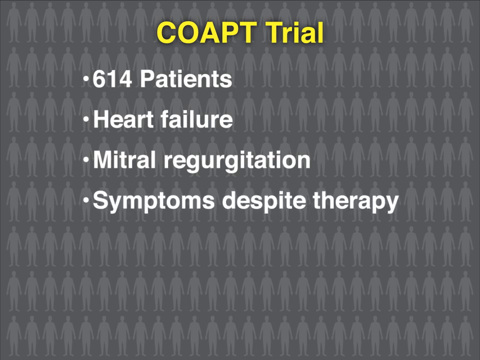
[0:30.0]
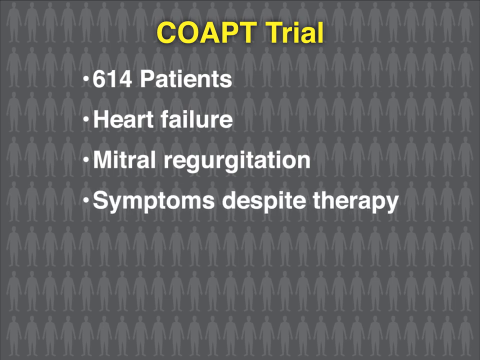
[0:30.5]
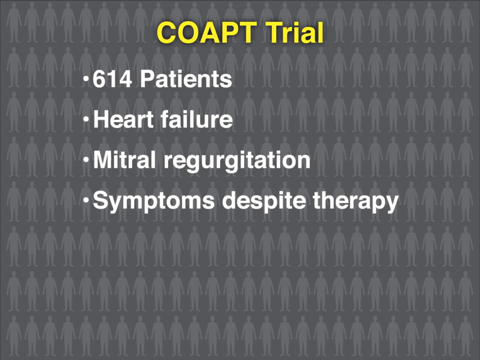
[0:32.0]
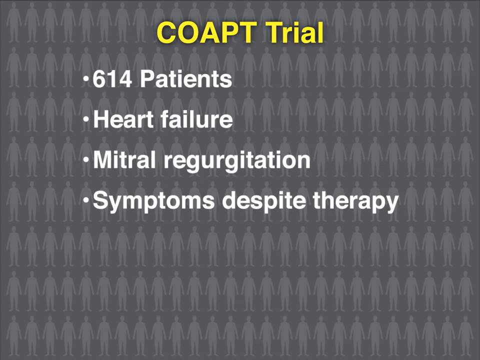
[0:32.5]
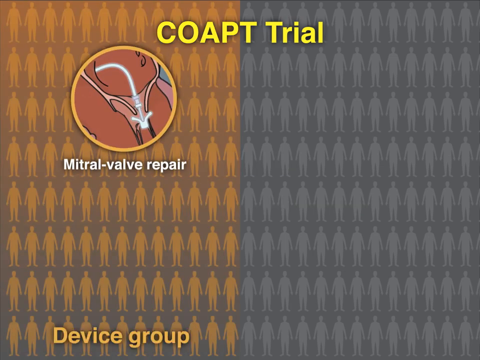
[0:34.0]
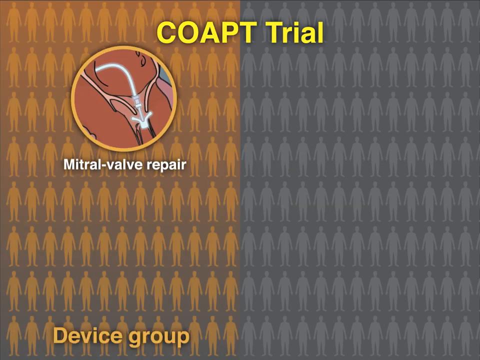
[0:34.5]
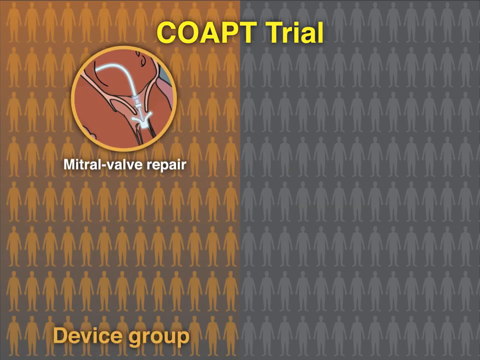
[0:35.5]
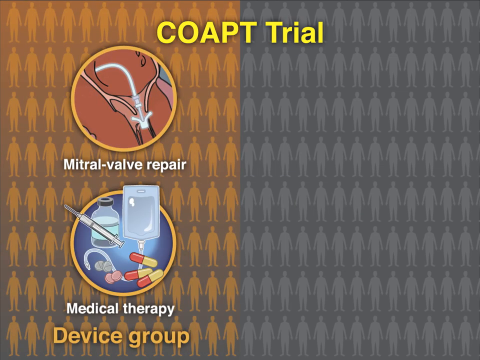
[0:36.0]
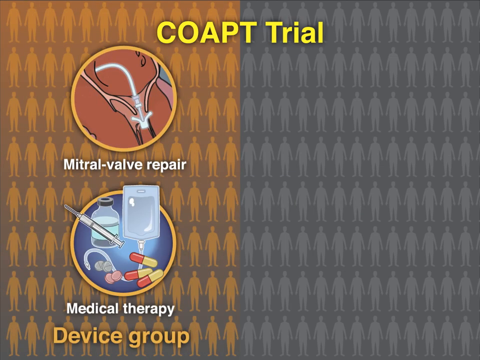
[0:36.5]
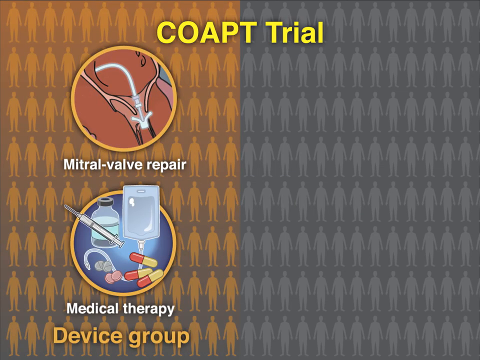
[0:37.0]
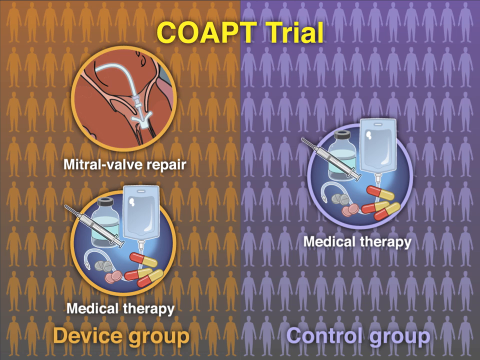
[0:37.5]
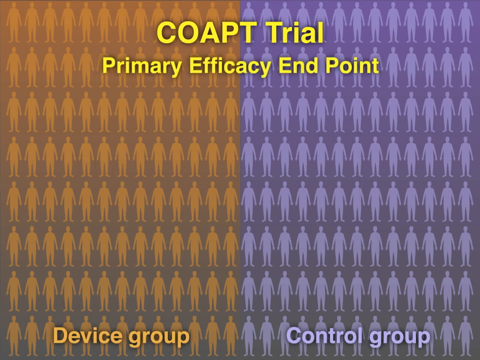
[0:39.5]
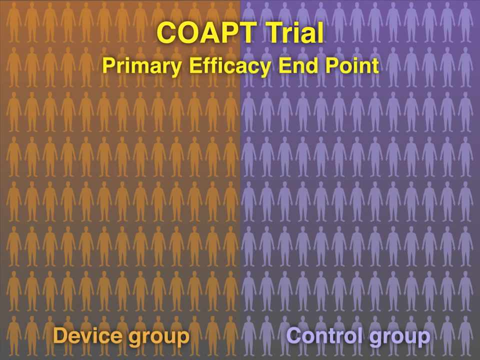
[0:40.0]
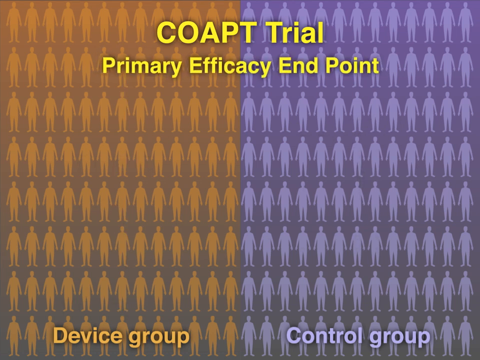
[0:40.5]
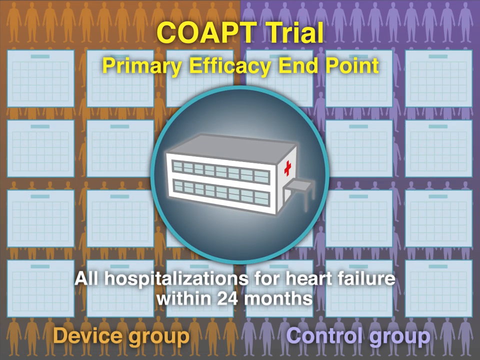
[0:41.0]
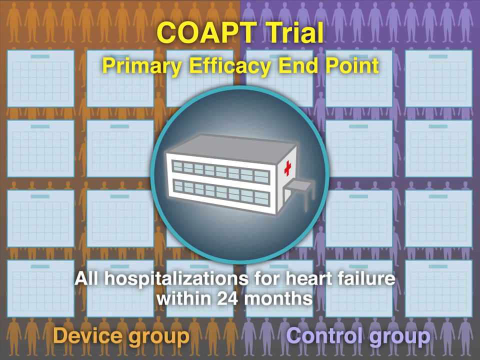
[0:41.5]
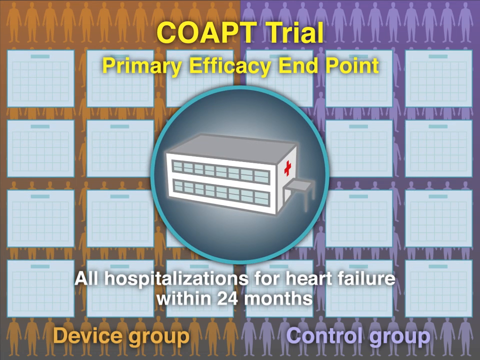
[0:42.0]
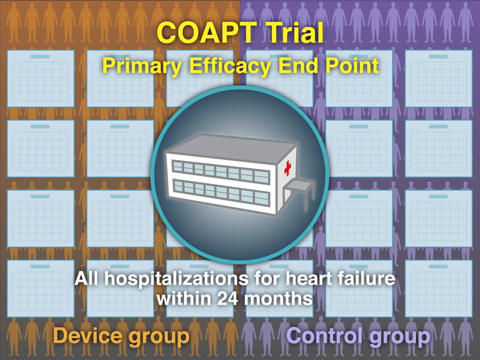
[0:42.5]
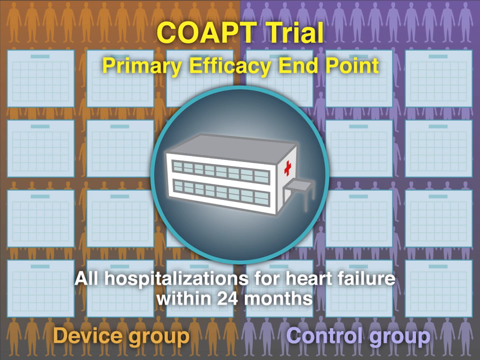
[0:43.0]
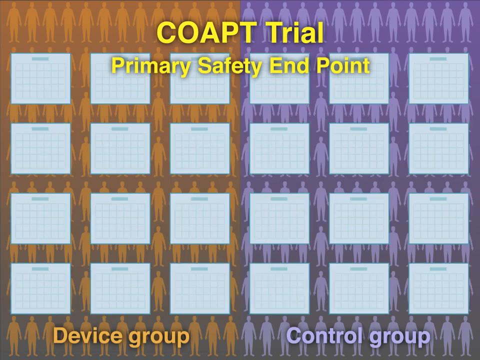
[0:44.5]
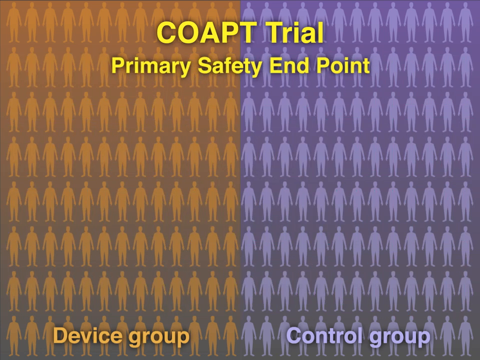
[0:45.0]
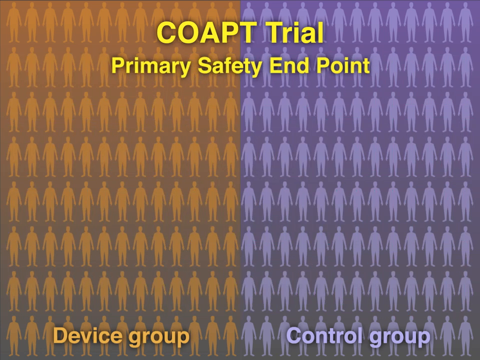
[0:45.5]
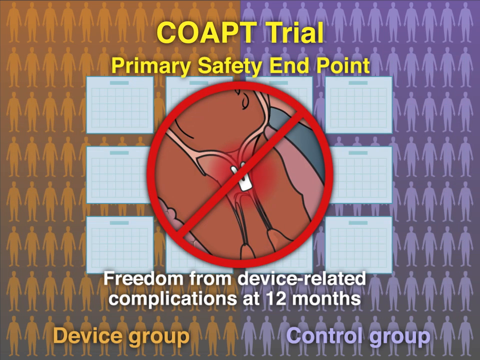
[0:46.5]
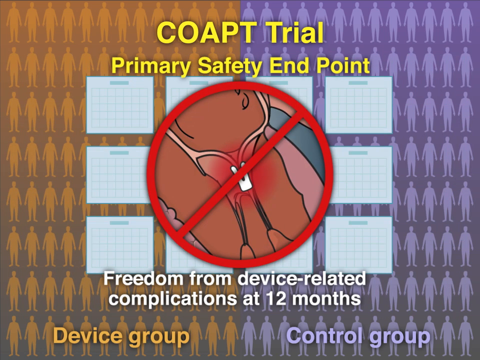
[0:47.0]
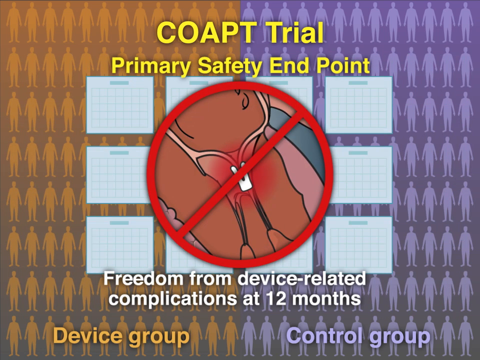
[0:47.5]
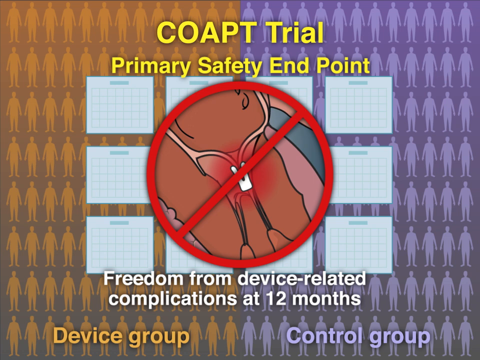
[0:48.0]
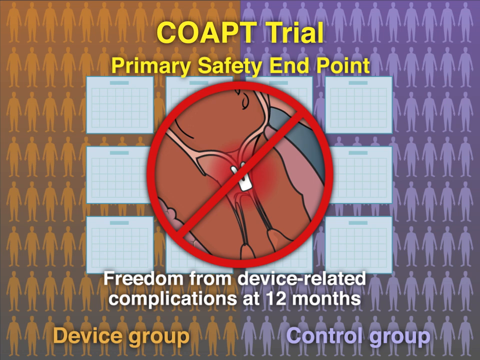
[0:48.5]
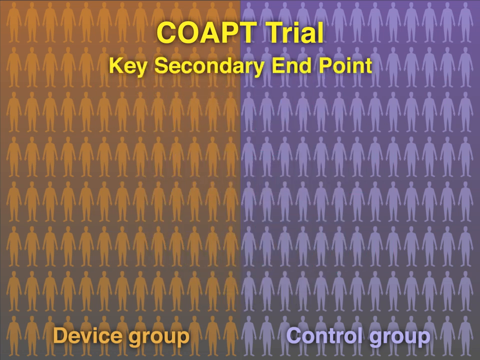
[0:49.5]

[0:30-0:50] A slide titled "COAPT Trial" appears, with "COAPT" in all capital letters and "Trial" with only the T capitalized, both in yellow. Beneath the title are four headliners in white: "614 patients", "heart failure", "mitral regurgitation" and "symptoms despite therapy". They are set against gray with silhouettes of human people in the background. The next slide, also titled "COAPT Trial" at the top in yellow, has a cartoon depiction of mitral valve repair, apparently showing the mitral valve being repaired. Beneath it is a cartoon depiction of some type of therapy, showing medications, IVs and other things used for therapy. On the right side of the slide is another cartoon depiction of medical therapy with the same image of IVs, pills, needles and drugs. A third slide reads "COAPT Trial, primary efficiency endpoint". Beneath it is a cartoon hospital with a blue circle around it, and underneath that it reads "all hospitalizations for heart failures within 24 months".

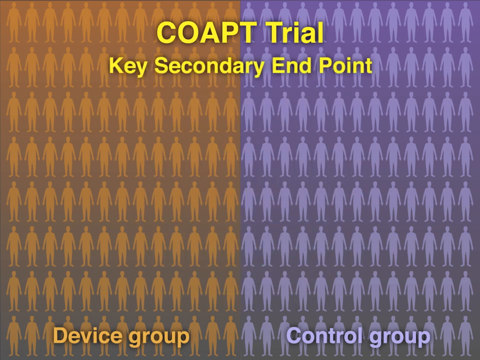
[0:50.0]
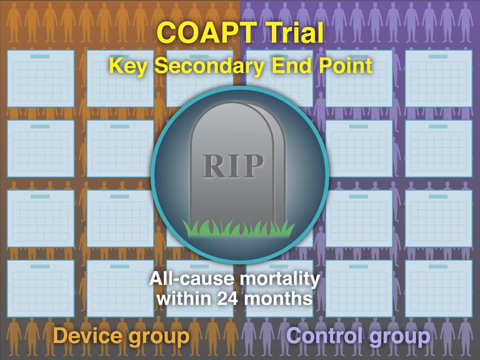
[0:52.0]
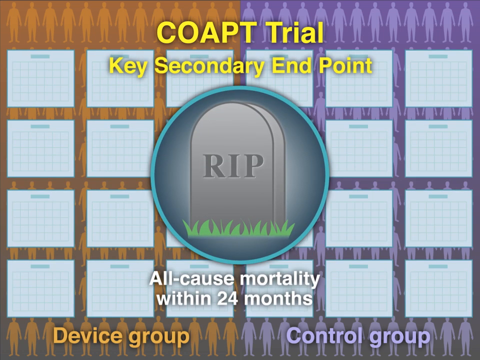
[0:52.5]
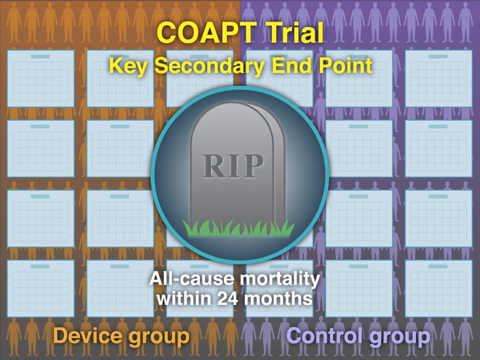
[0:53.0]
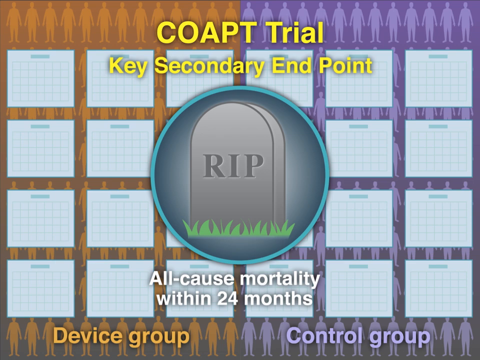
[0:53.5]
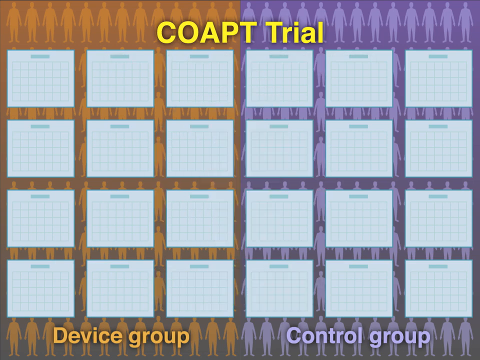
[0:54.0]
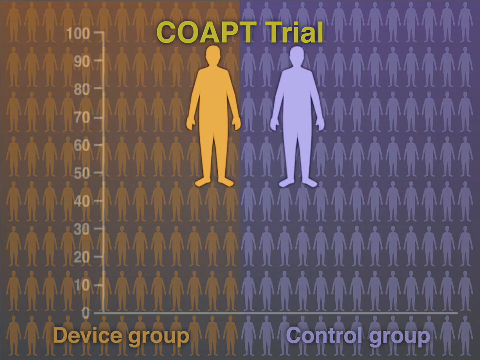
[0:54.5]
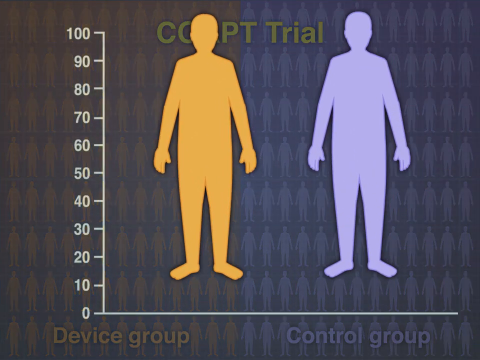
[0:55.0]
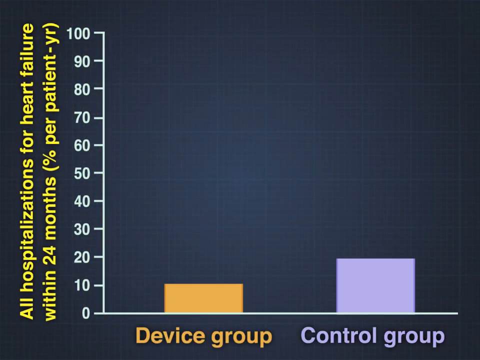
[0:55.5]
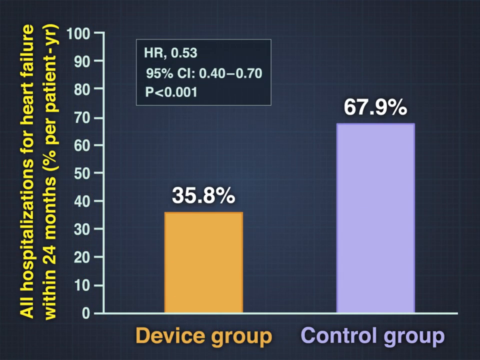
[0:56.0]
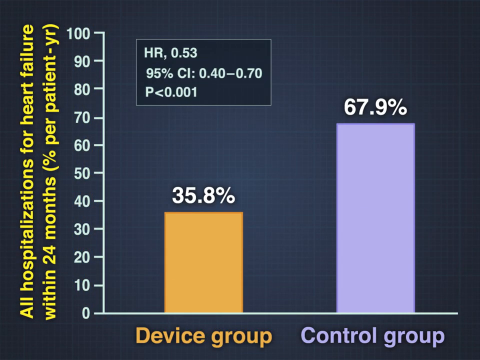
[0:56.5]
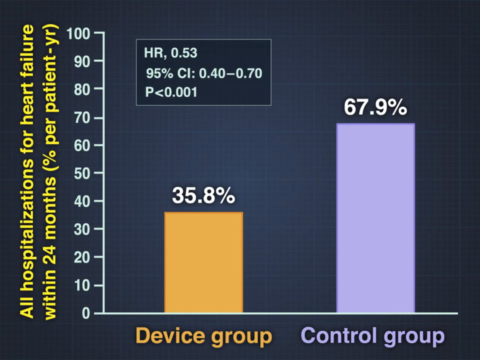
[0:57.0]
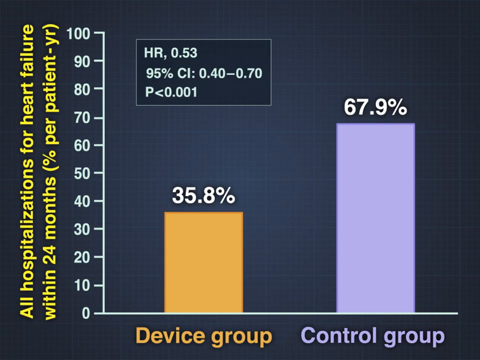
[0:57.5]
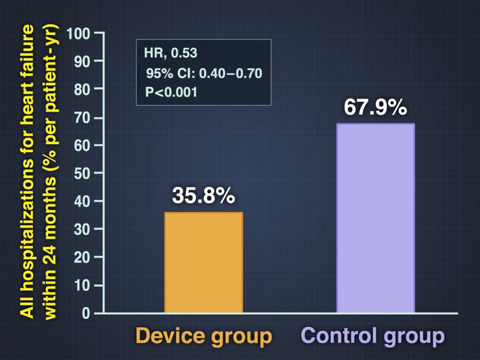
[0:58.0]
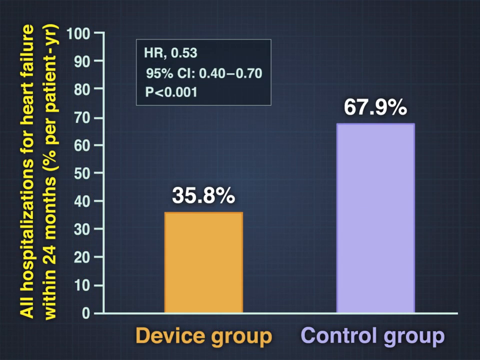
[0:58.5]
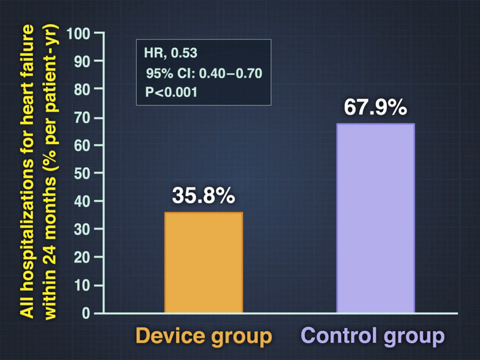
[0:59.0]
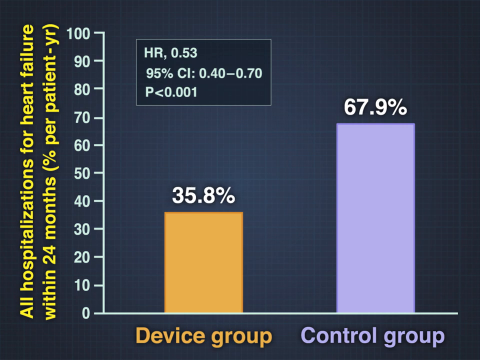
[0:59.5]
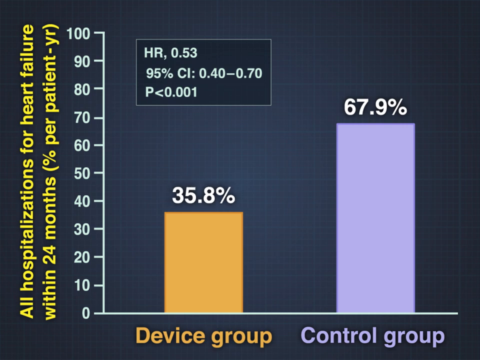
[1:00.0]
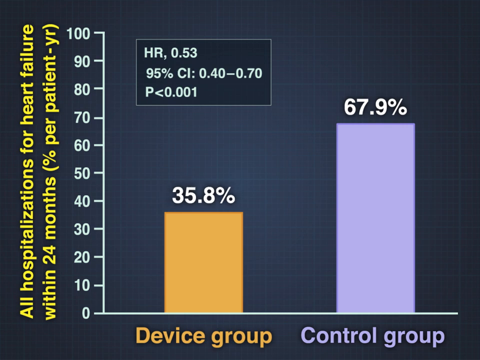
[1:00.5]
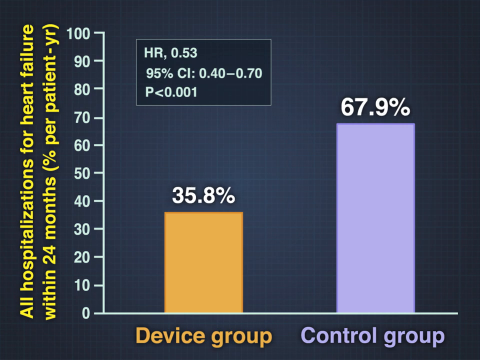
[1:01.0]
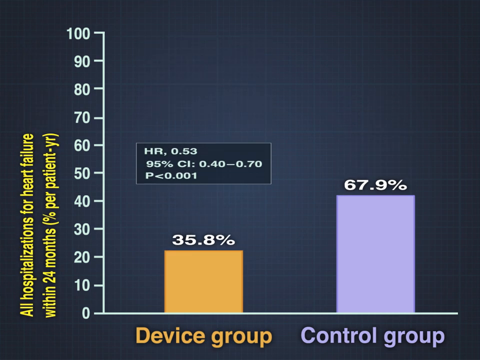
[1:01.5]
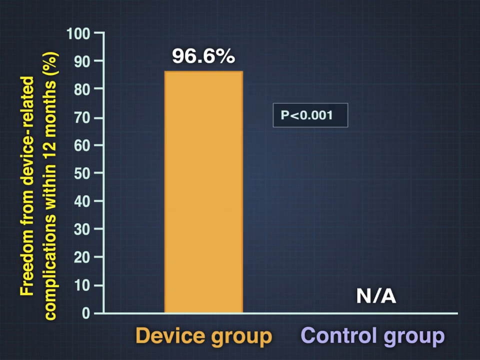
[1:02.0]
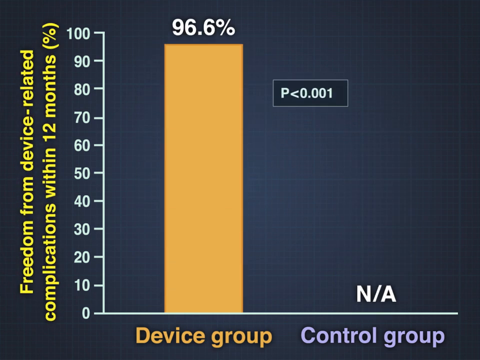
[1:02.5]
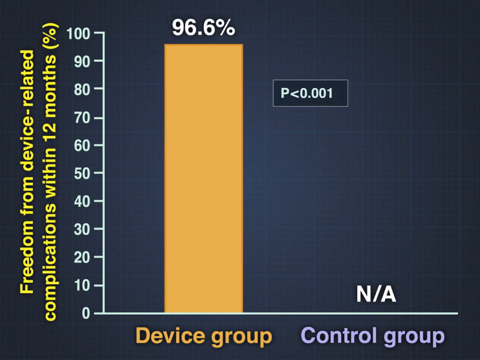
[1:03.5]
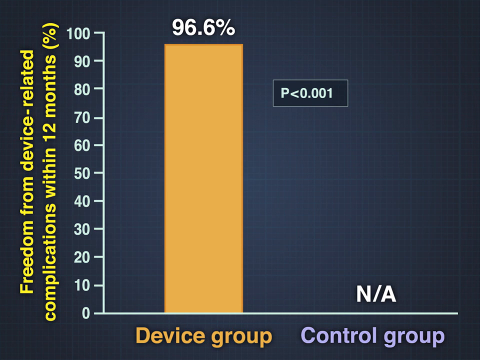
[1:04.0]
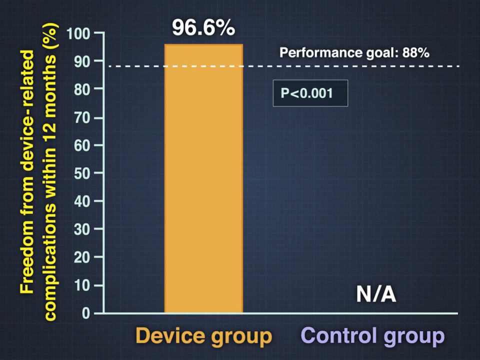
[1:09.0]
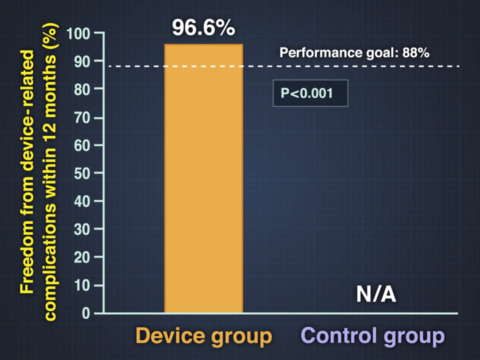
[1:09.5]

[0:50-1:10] The "COAPT trial" title is at the top, with the subtitle "key secondary endpoints" beneath it. Below that is a gray headstone reading "RIP" with a blue circle around it, and text reading "all cause mortalities within 24 months". The background is full of calendars. The next slide, titled "COAPT Trial", shows two human silhouettes, one drawn in orange and the other in blue, with a measurement next to them on the left side of the screen running vertically from zero to 100. Other graphs then appear, measuring hospitalizations or heart failures within 24 months.